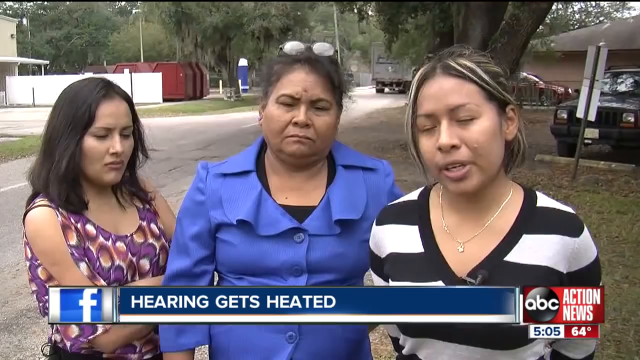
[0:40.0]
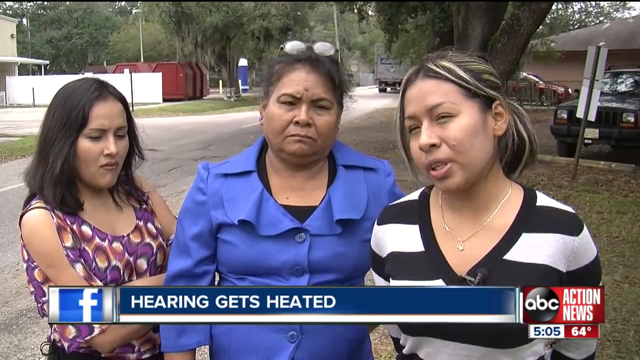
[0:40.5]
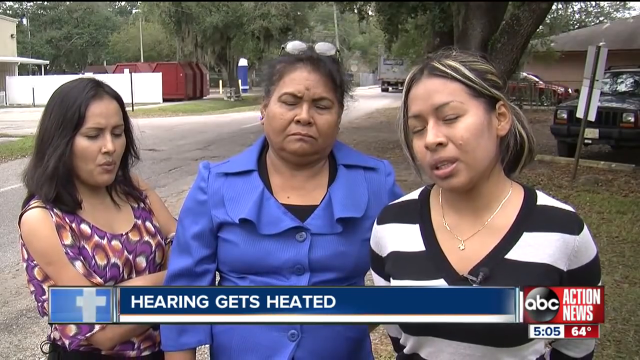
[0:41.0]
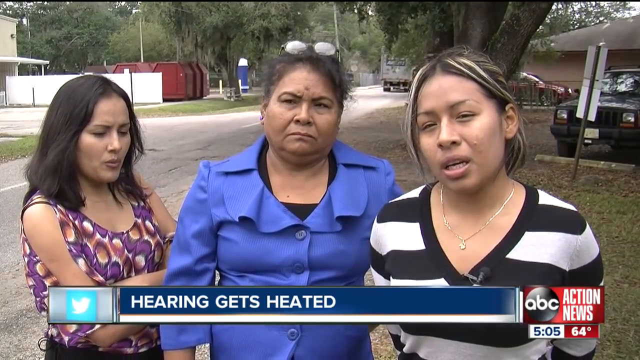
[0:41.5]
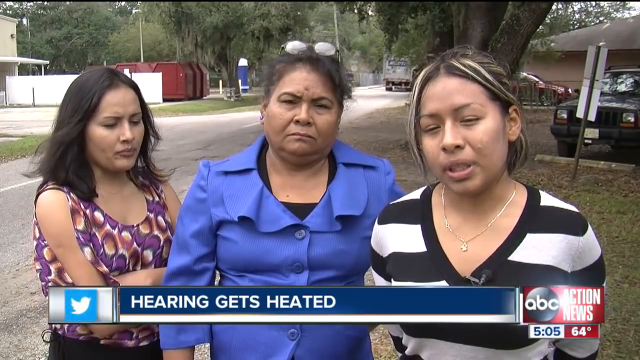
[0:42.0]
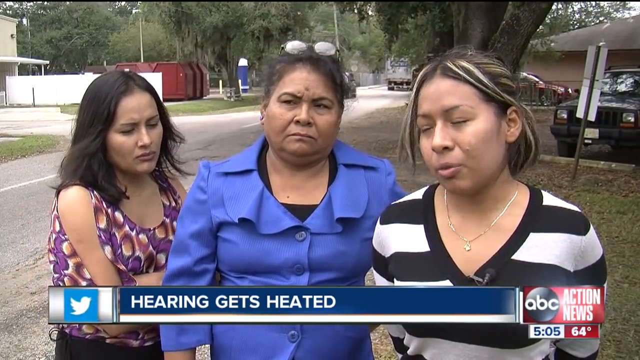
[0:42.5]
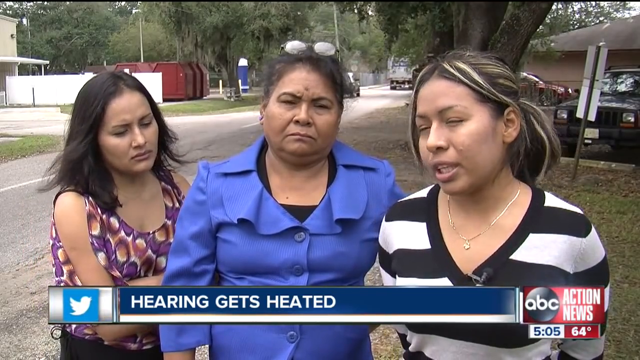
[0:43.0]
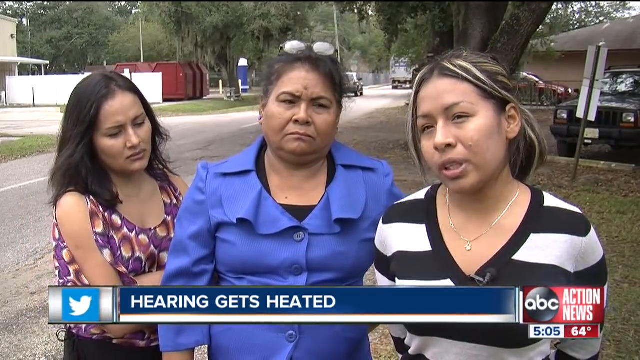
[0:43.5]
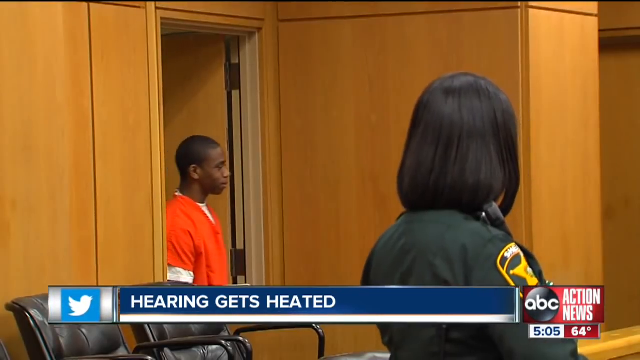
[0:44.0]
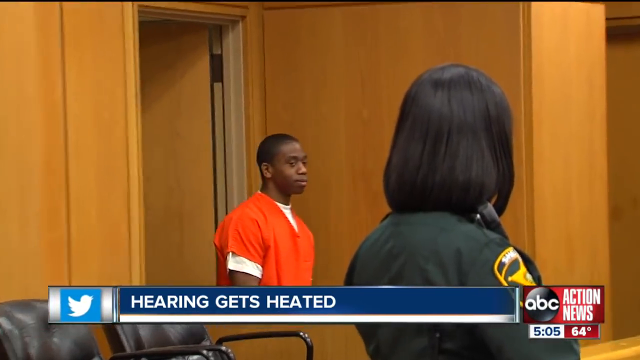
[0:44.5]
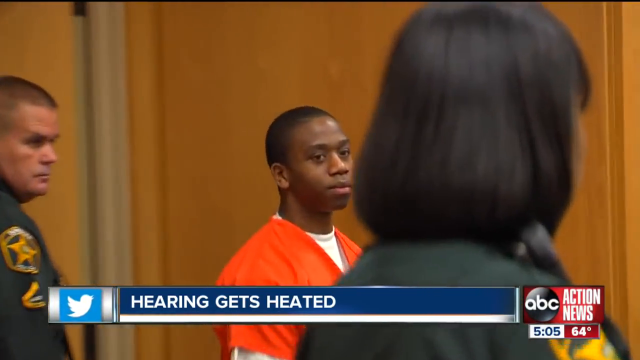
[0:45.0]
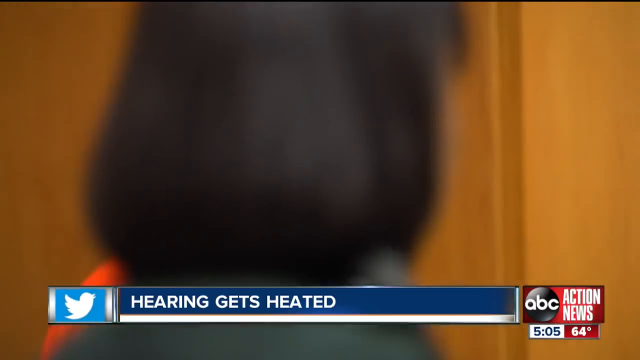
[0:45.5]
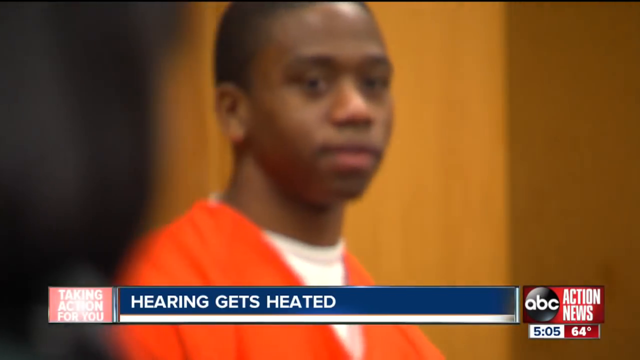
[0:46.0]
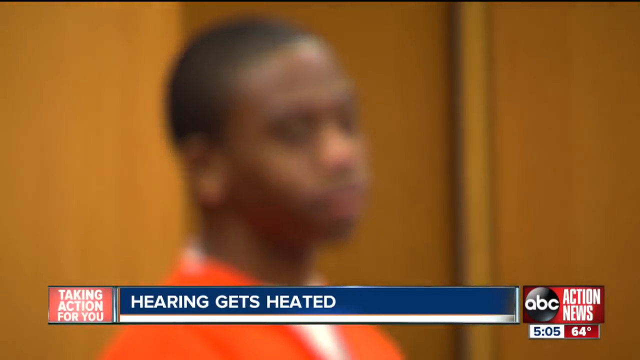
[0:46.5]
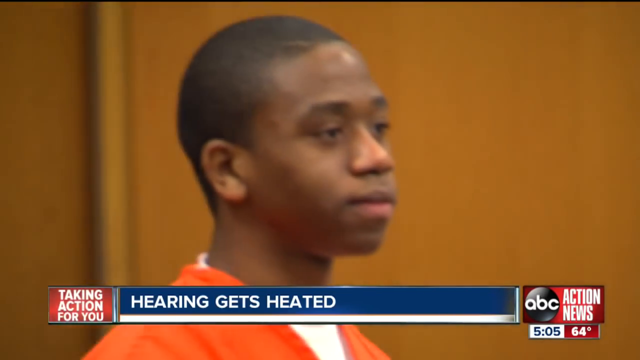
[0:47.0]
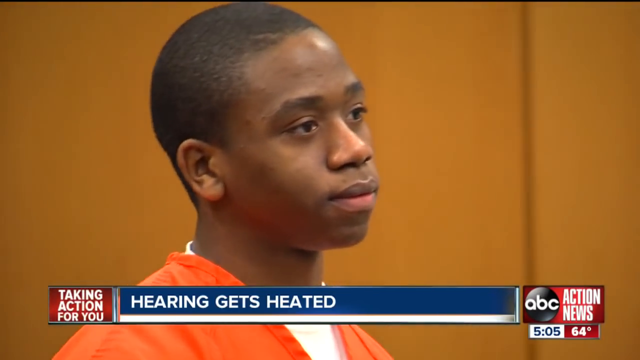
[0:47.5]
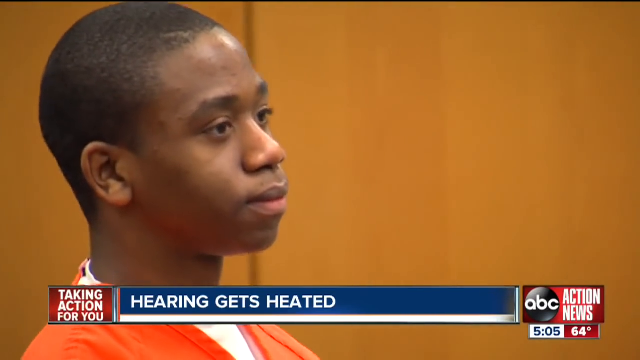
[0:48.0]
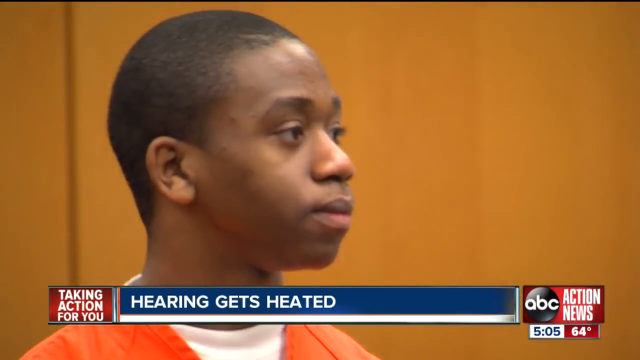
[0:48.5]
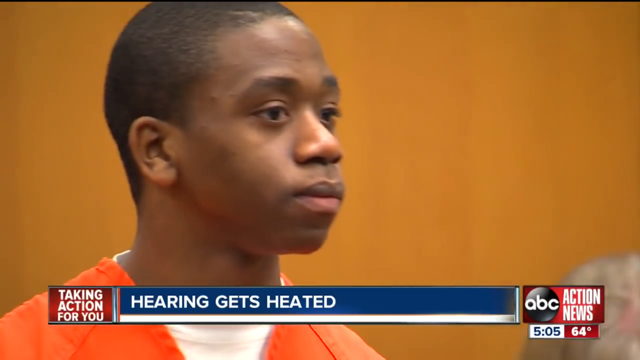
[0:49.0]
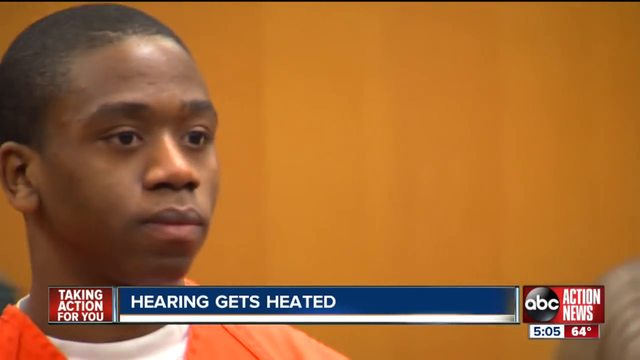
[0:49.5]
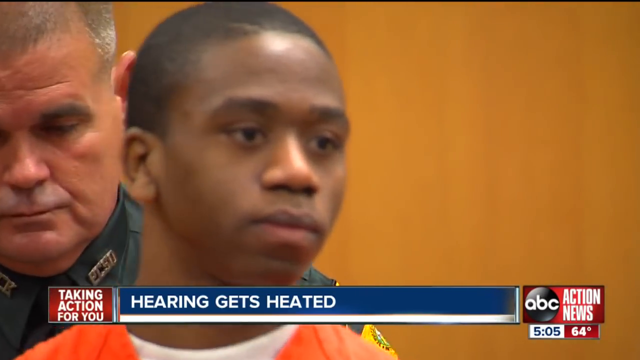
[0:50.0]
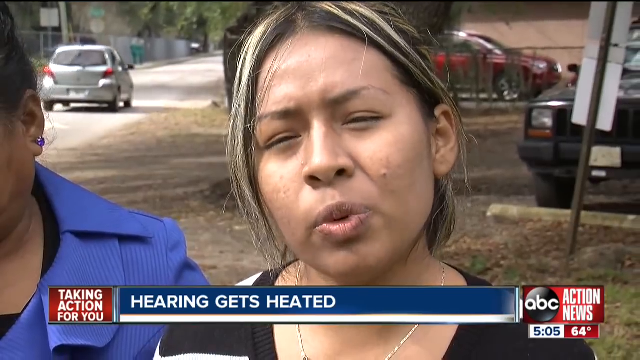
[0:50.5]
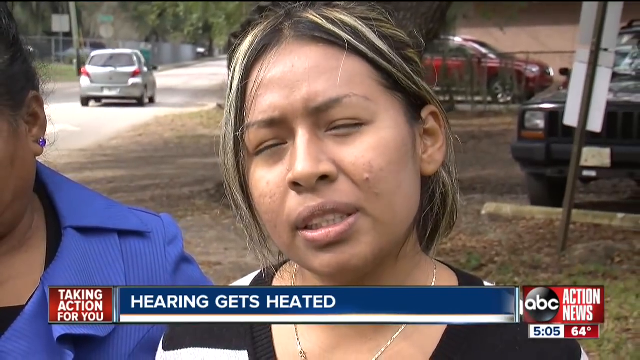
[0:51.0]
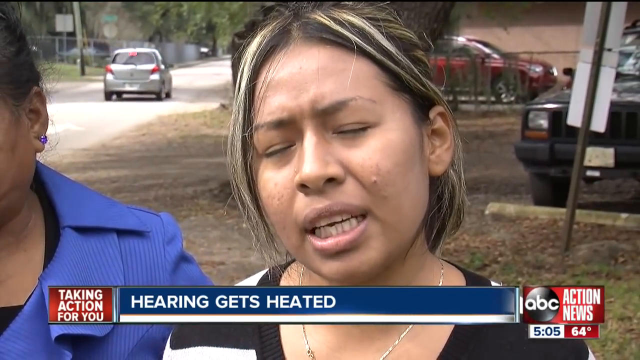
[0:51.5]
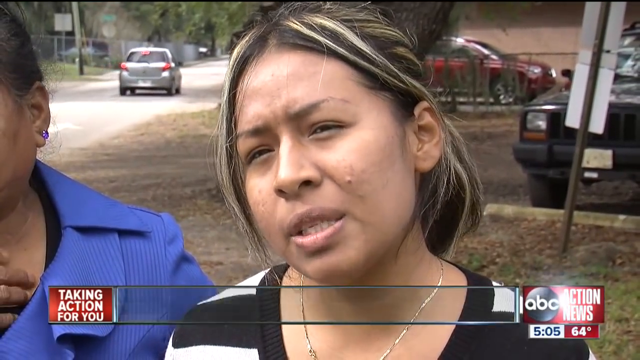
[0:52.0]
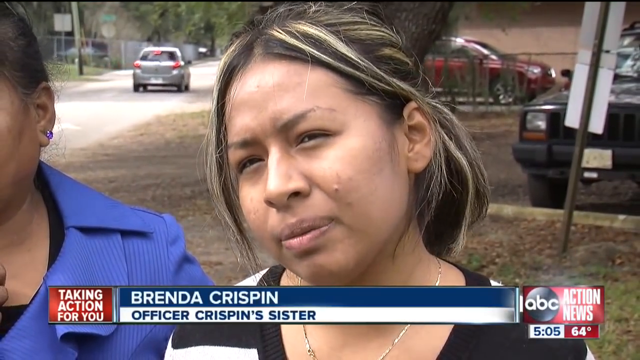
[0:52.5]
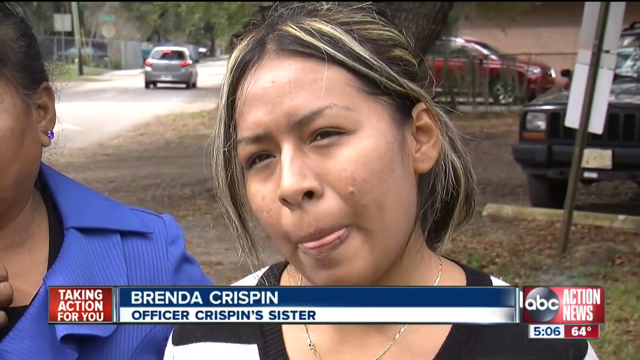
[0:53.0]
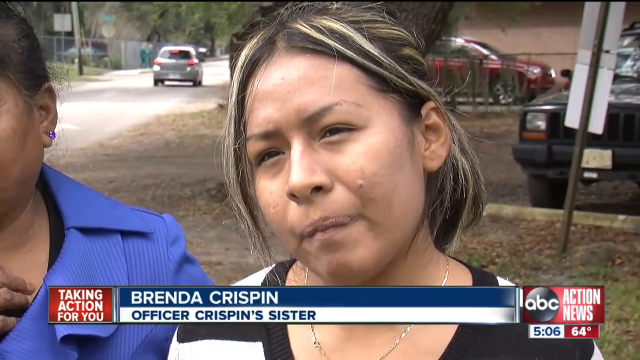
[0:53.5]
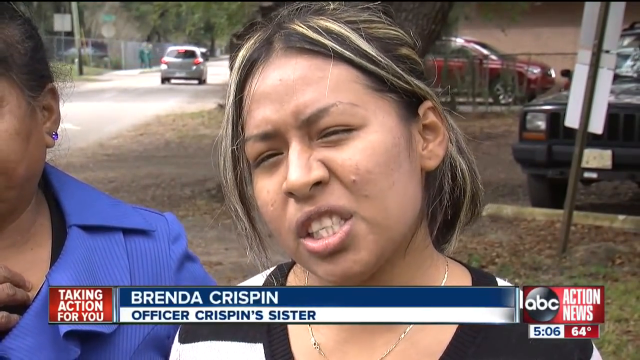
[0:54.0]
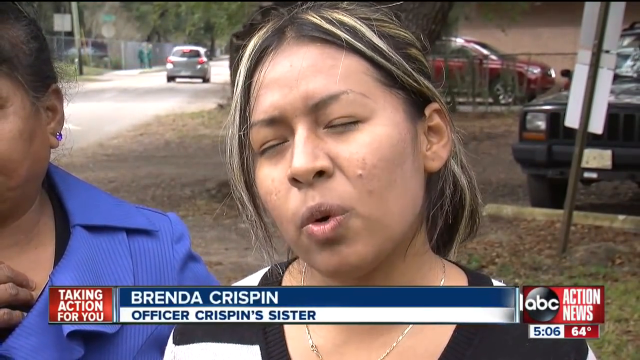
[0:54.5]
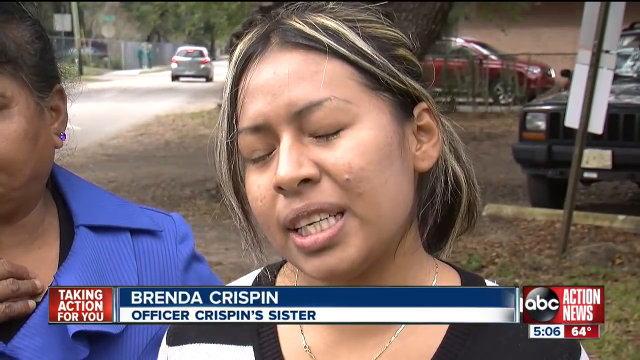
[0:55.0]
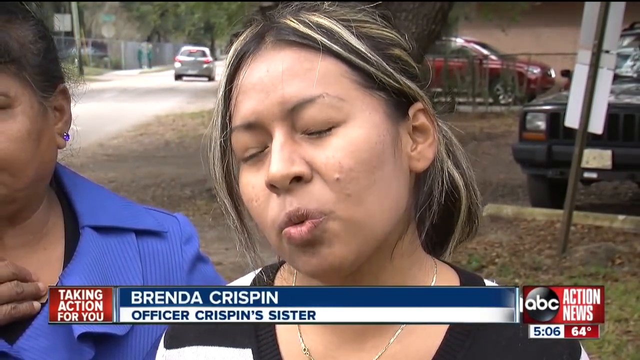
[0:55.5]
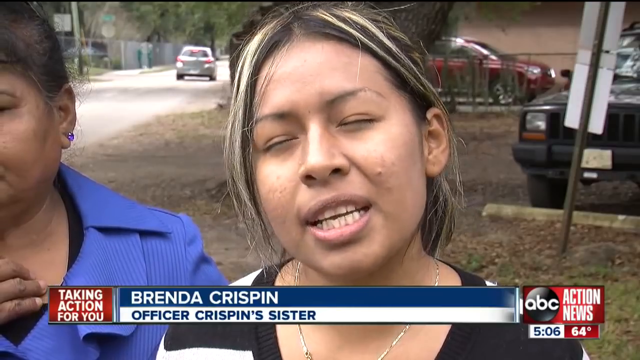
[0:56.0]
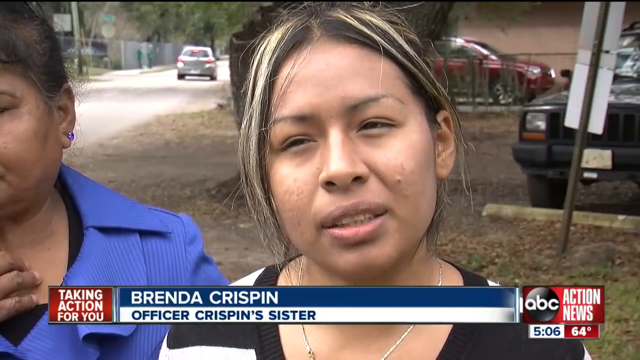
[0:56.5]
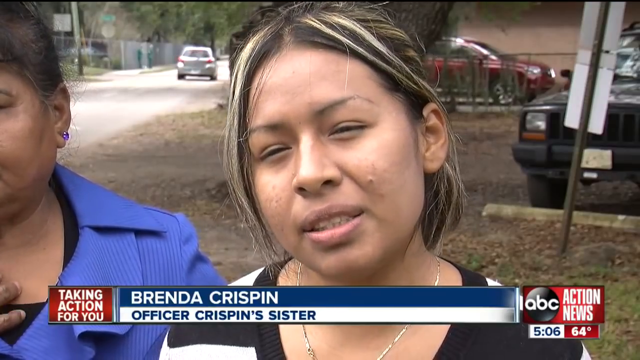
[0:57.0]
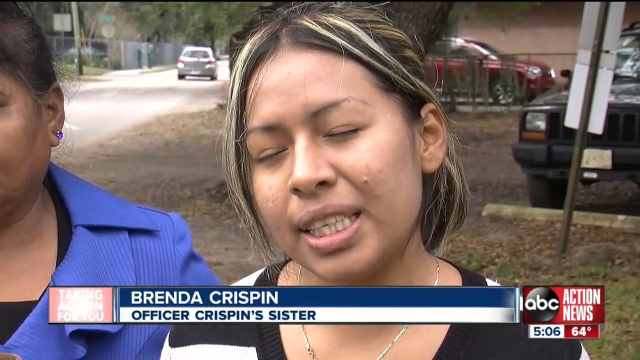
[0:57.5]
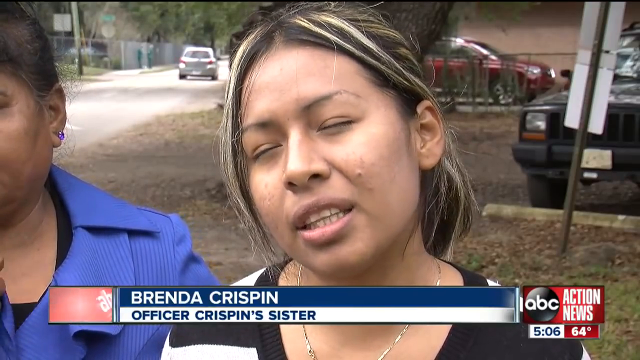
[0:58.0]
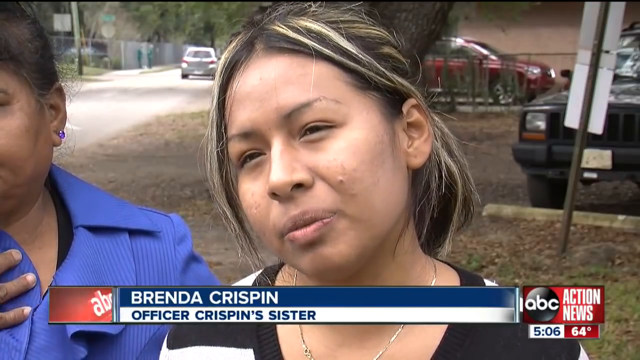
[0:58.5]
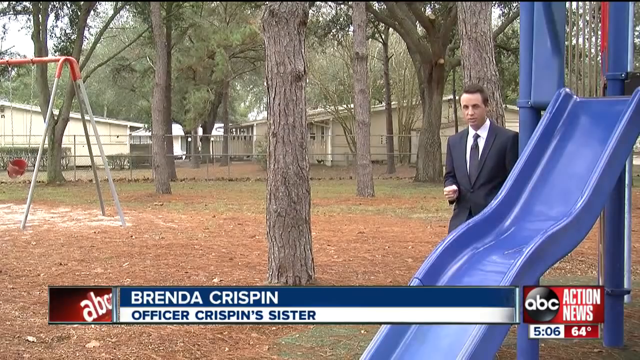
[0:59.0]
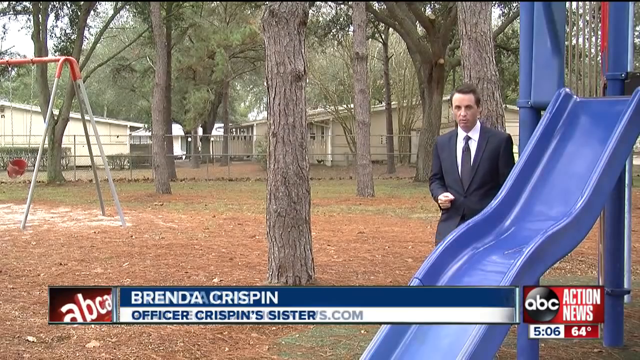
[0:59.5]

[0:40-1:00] Three women stand on the side of a road in the street. In the background are trees on top of lawns and a long road, with a truck parked at the end of it and a fence next to the truck. Directly behind the left woman's head is another white fence in someone else's yard. The woman on the far left wears a purple blouse with orange spots and has long black hair; her arms are crossed. To her right is an older woman with fuzzy black hair who appears to be Latino, wearing a bright blue dress with a black undershirt and a pair of glasses on top of her head. On the far right is a woman with brownish-blonde hair and a big nose with a mole next to it, wearing a golden necklace with some kind of pendant and a short-sleeved black and white shirt. Behind her to the right is a sign in front of a parking space, where a Jeep is parked. The women continue to talk. Next, a man is shown walking into the courtroom: the man who has been in jail, wearing the orange jumpsuit.